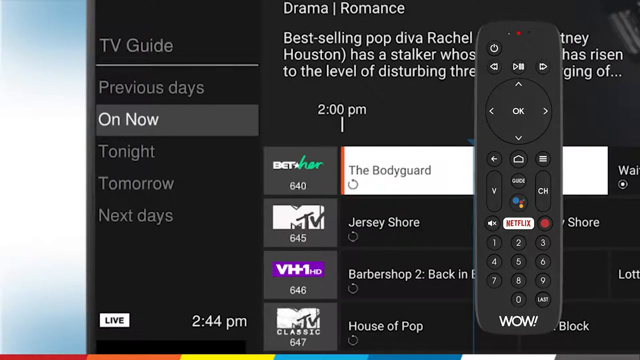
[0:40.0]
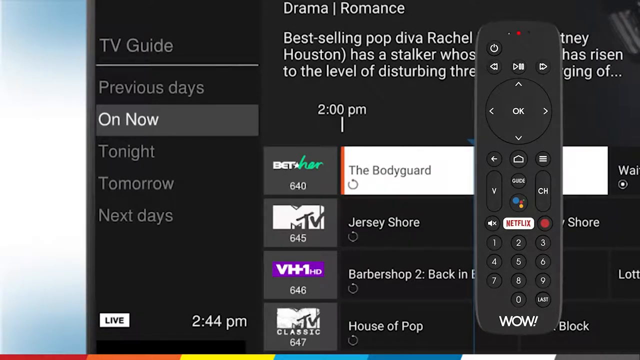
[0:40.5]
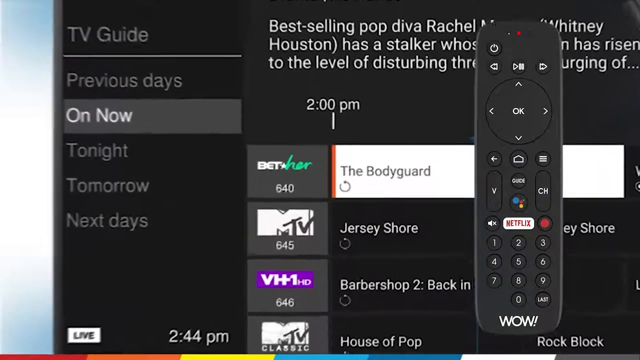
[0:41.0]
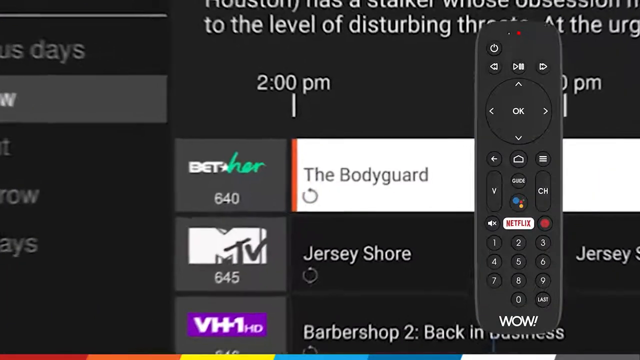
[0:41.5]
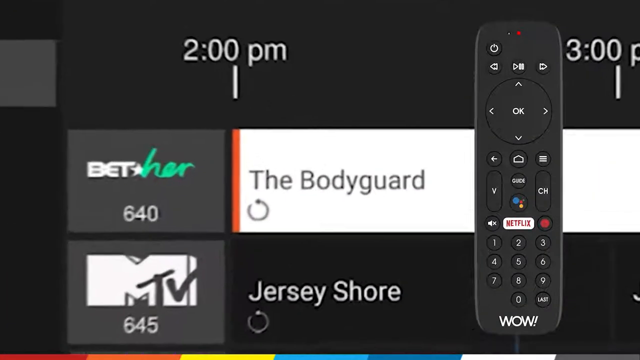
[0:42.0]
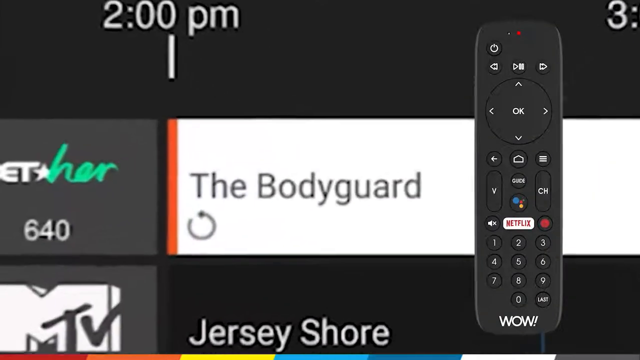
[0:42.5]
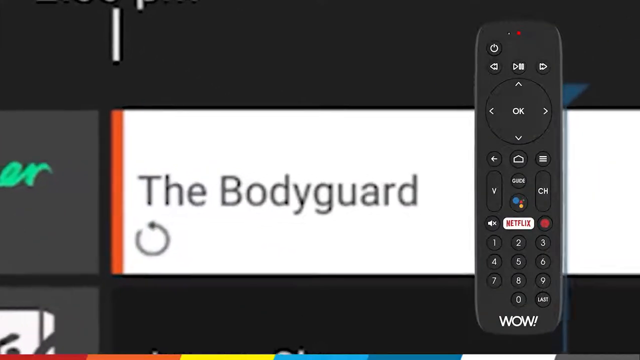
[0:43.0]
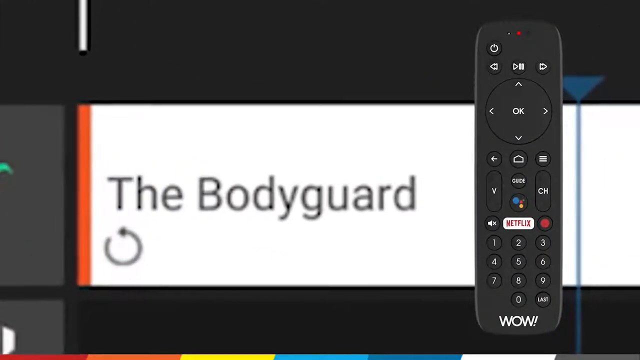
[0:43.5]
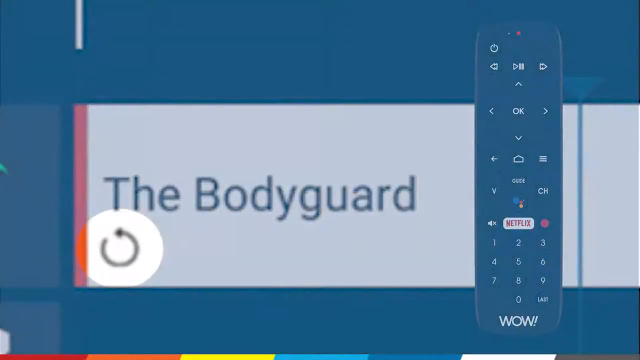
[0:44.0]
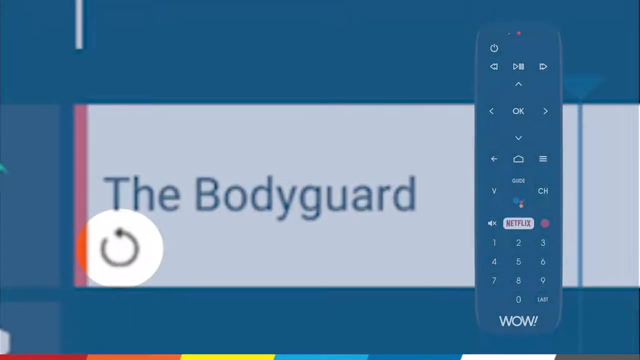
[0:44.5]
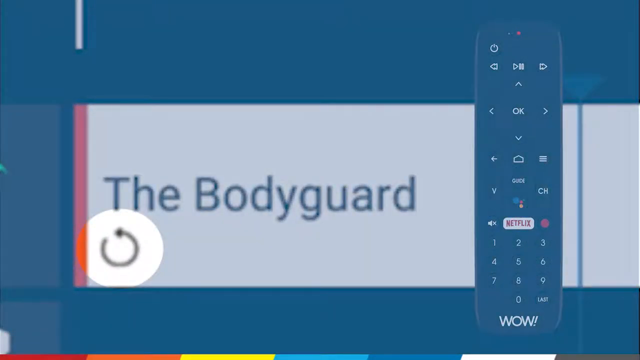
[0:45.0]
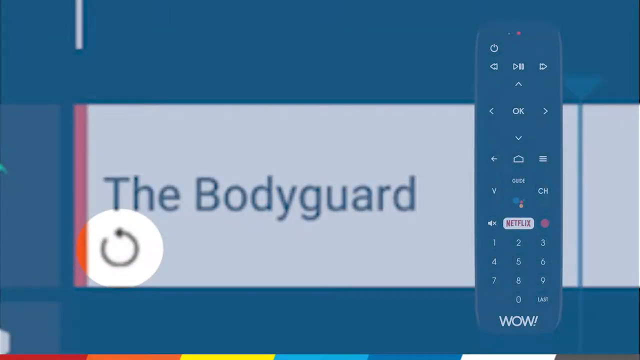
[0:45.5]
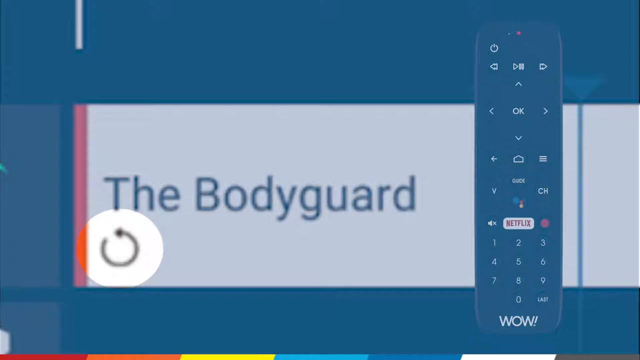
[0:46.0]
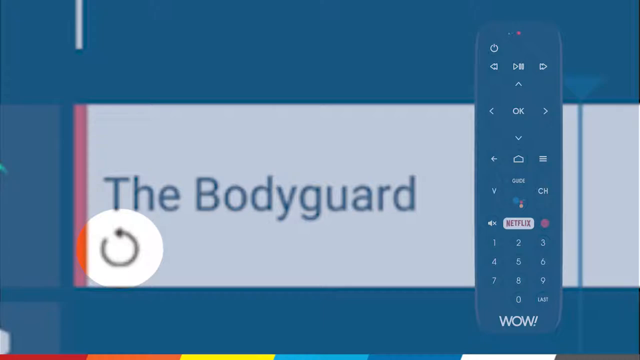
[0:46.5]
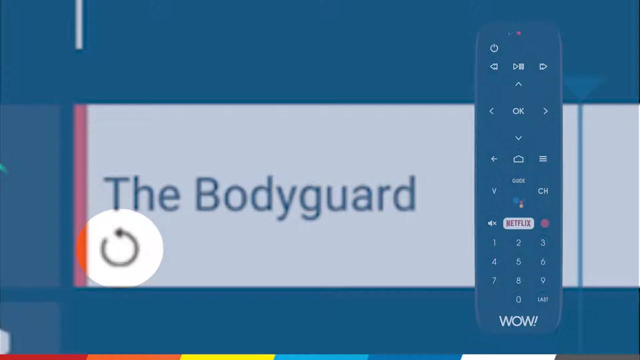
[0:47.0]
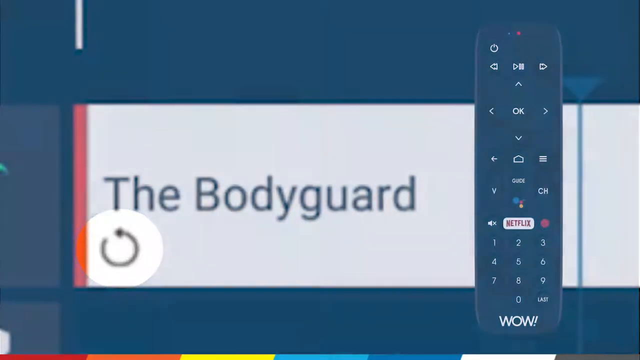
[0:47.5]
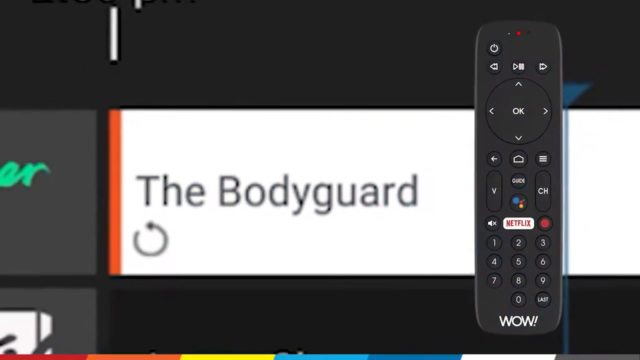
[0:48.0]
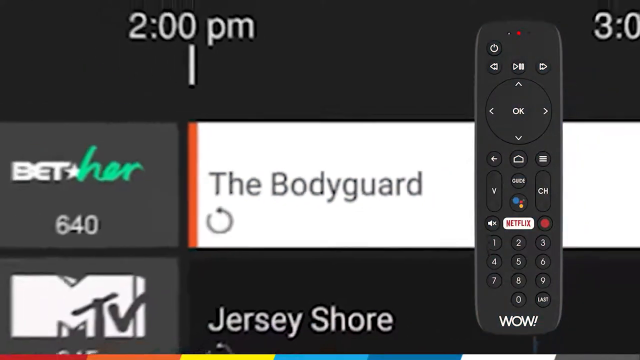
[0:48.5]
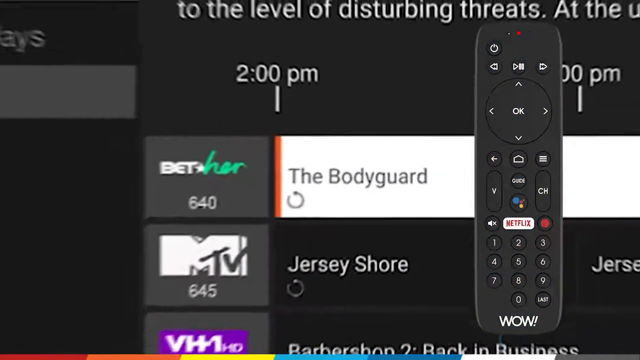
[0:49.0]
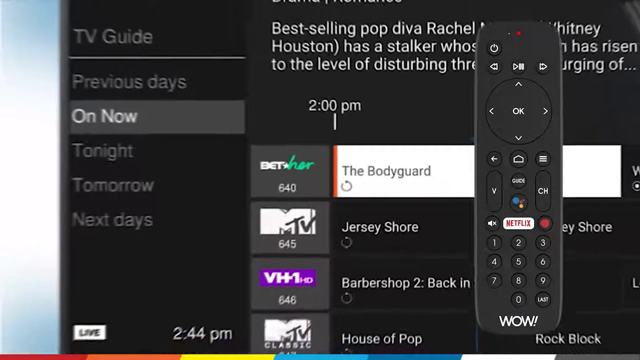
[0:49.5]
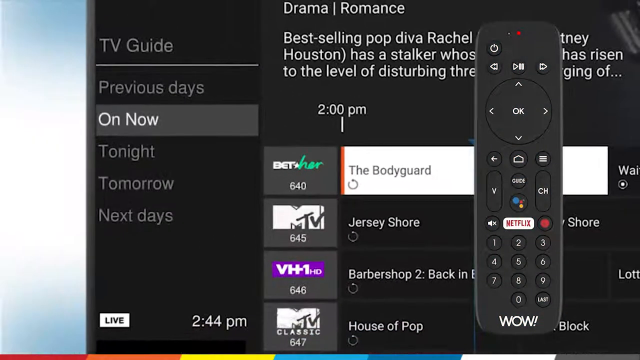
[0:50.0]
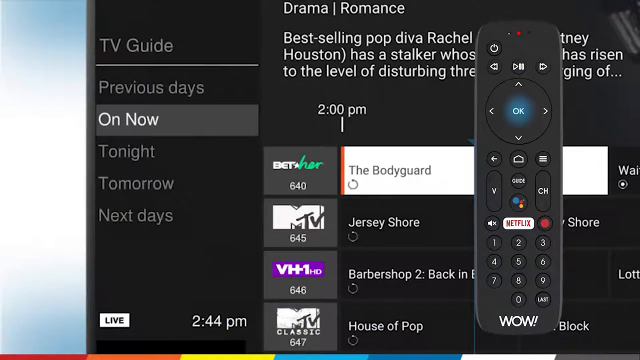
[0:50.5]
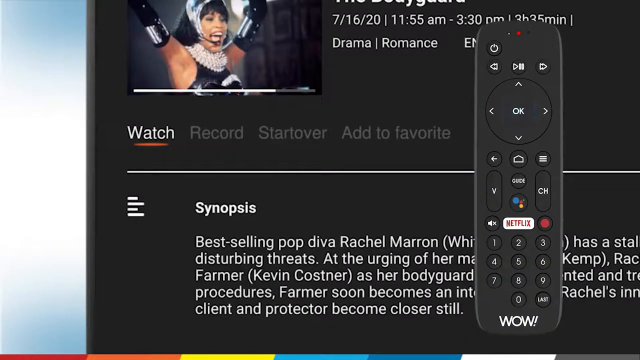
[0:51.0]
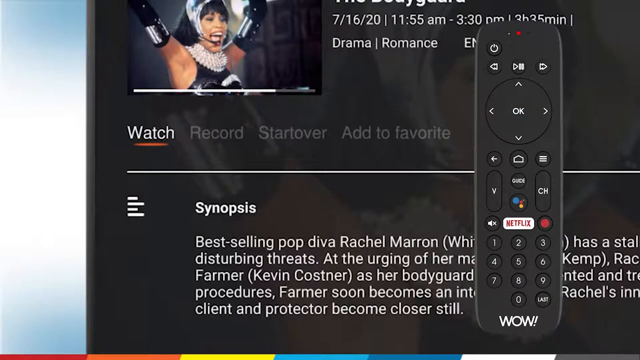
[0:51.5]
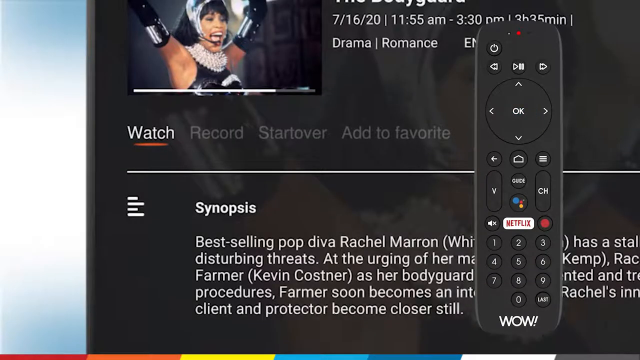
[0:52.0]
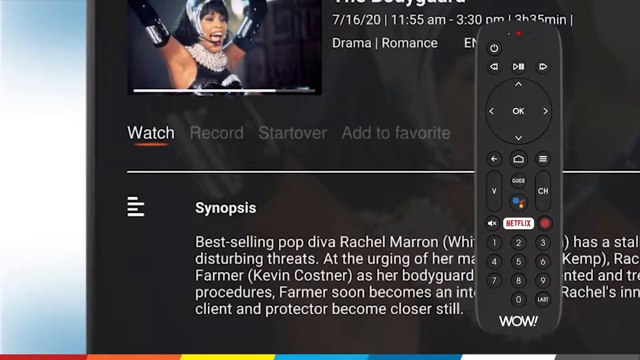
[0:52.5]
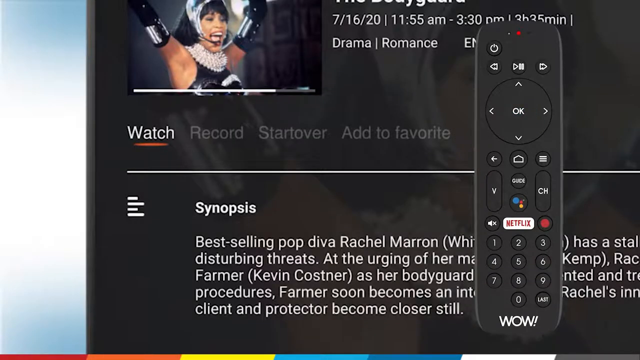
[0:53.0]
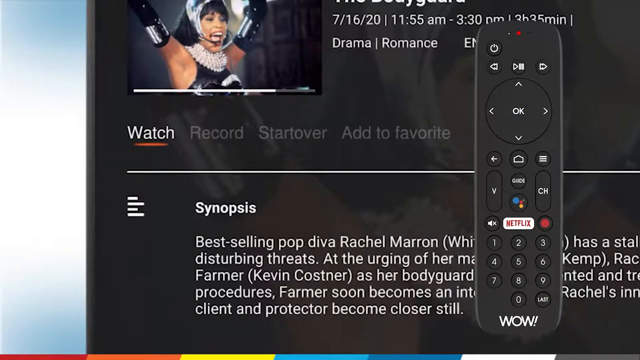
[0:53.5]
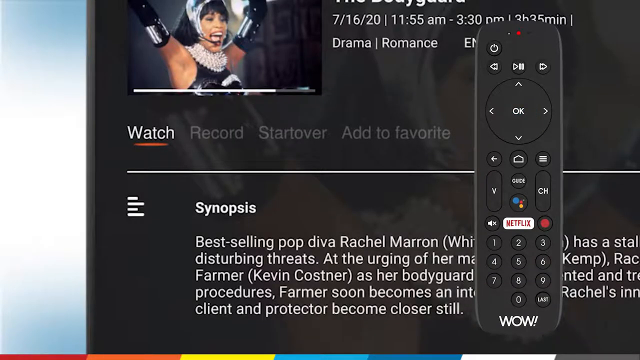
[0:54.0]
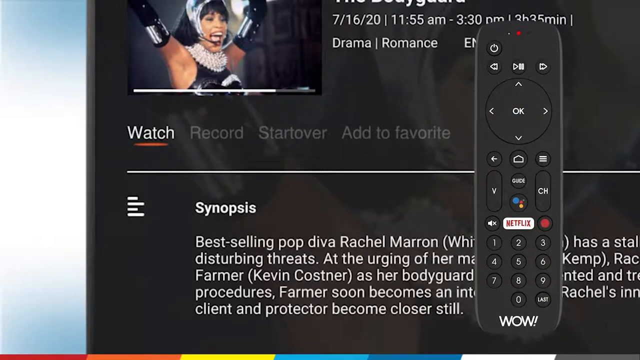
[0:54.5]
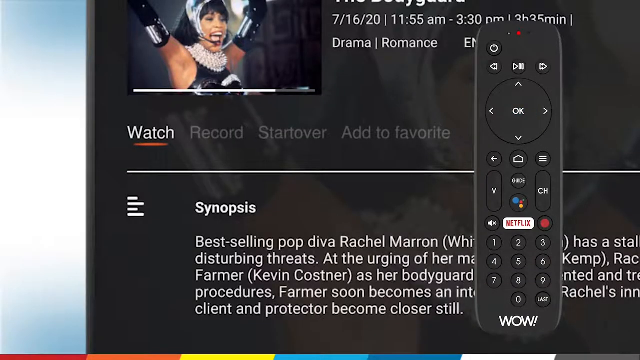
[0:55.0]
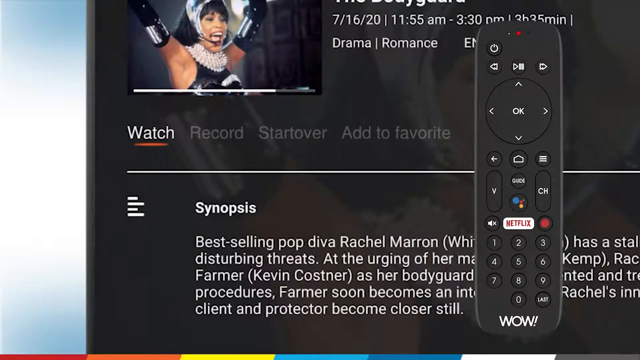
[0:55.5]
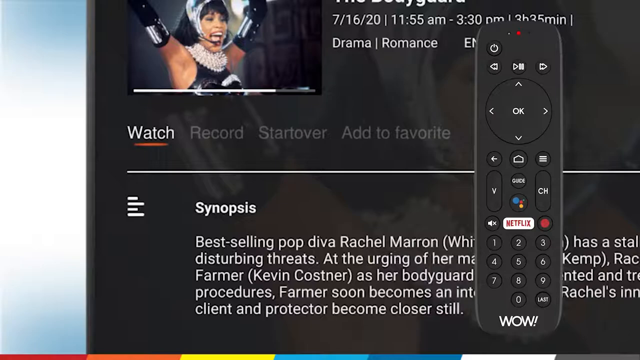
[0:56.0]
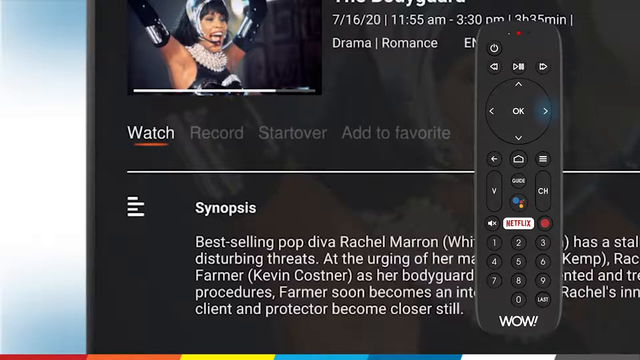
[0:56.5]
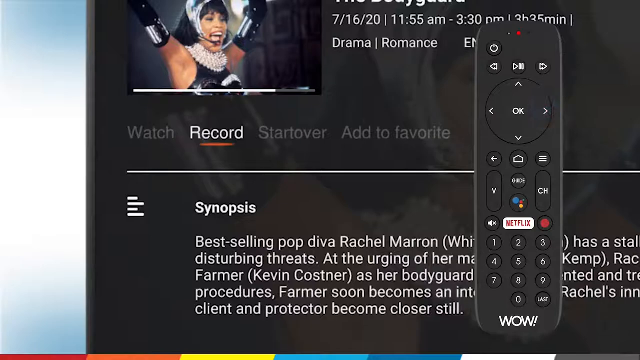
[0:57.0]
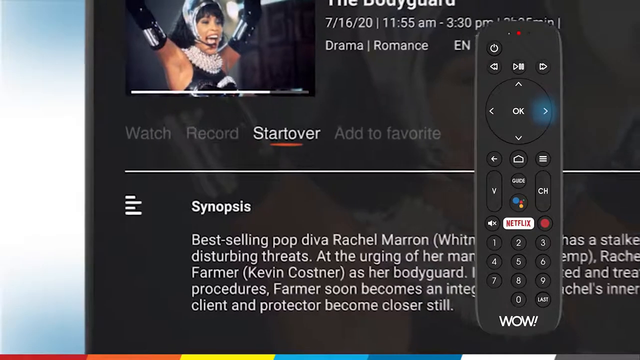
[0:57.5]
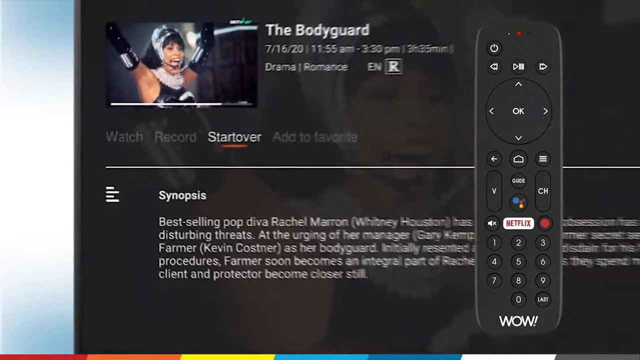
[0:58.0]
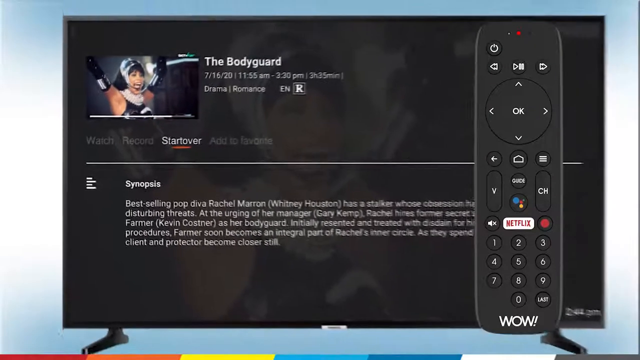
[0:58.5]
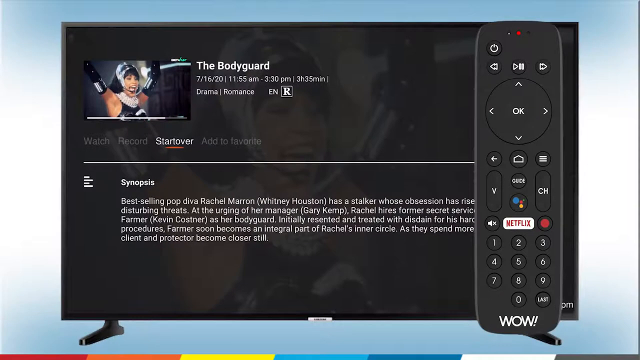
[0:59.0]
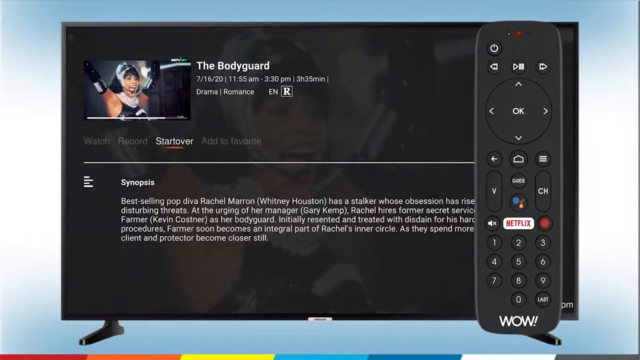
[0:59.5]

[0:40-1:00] The view zooms in, somewhat, on the background while the remote stays on the right side at the same size. It zooms in on an area that says "2 p.m." and "BET her", which is the channel, and then on what is showing at that time, a film called The Bodyguard. A small circle arrow at the bottom left of The Bodyguard is highlighted; it looks like a button for rewinding or going back to the beginning of something. The view then zooms out again and seems to go to a screen with information about The Bodyguard, including what seems to be a synopsis of the film. The screen stays here for a while. Then the right button on the remote is highlighted, and the highlight appears to move to the right two times, from watch to record to start over, where it seems to stay.